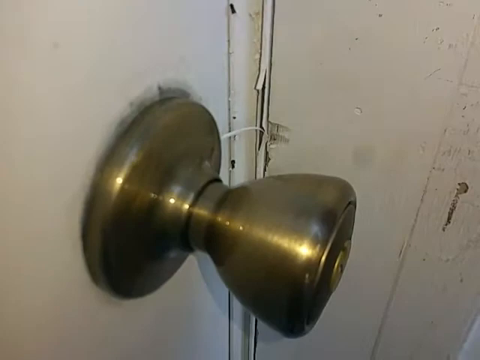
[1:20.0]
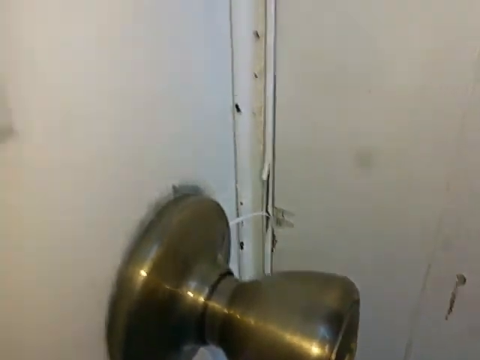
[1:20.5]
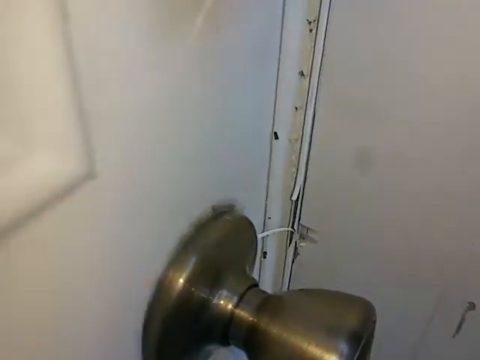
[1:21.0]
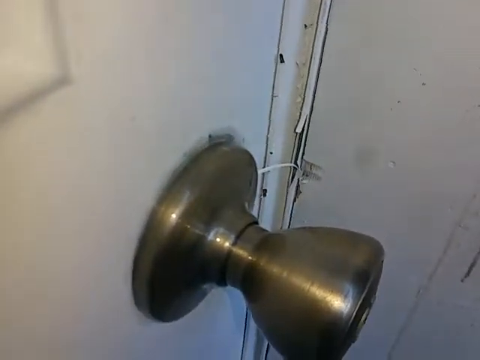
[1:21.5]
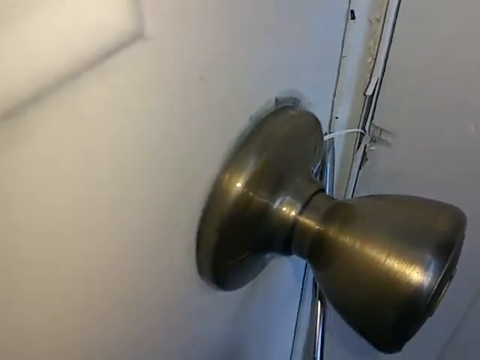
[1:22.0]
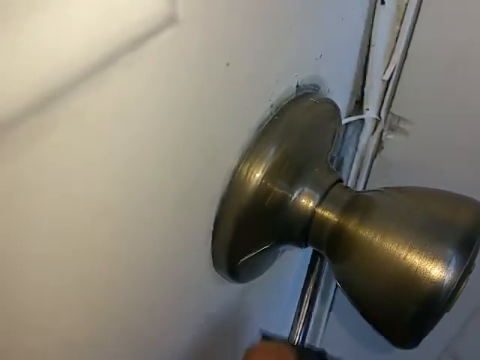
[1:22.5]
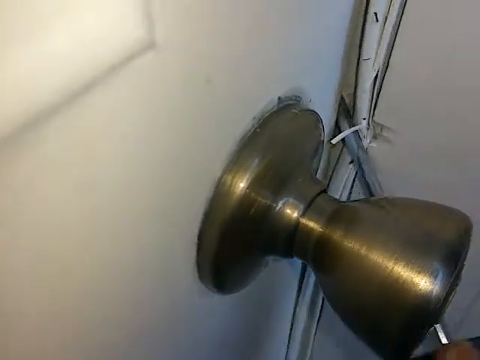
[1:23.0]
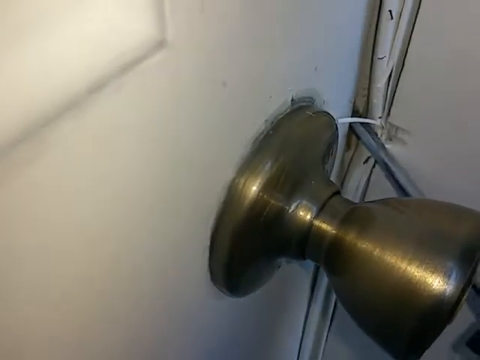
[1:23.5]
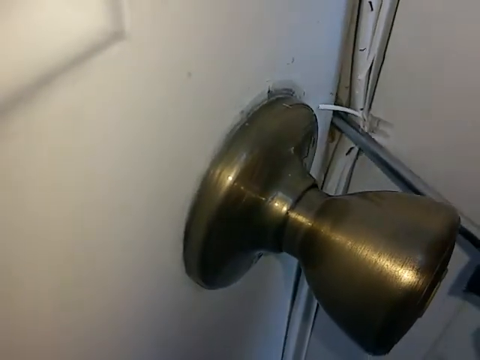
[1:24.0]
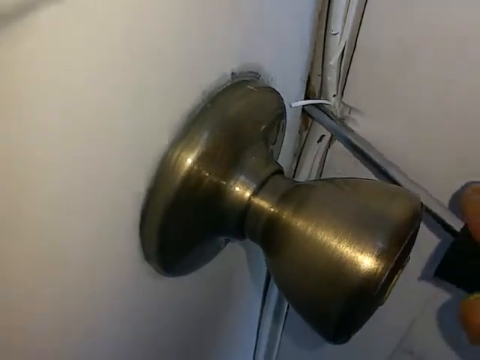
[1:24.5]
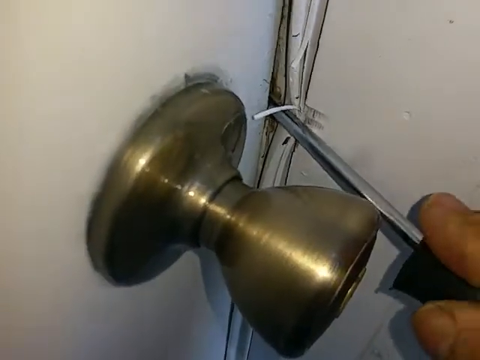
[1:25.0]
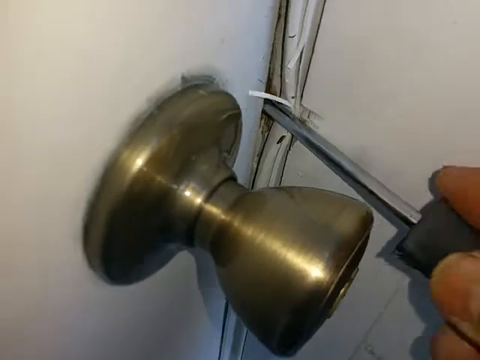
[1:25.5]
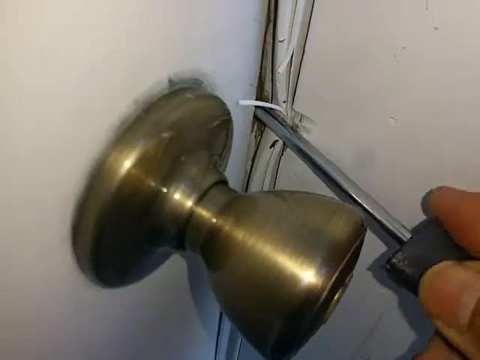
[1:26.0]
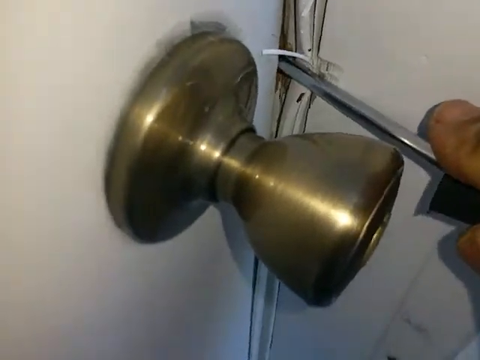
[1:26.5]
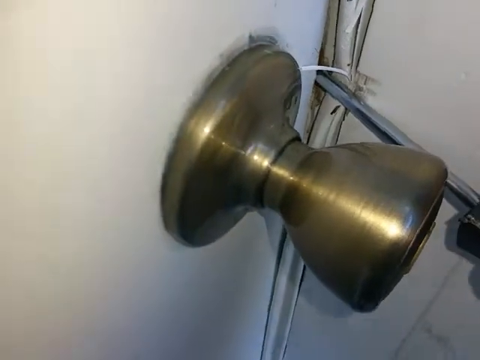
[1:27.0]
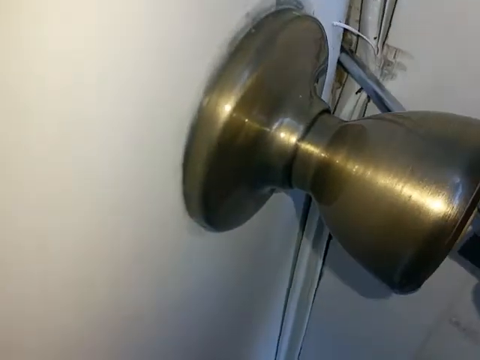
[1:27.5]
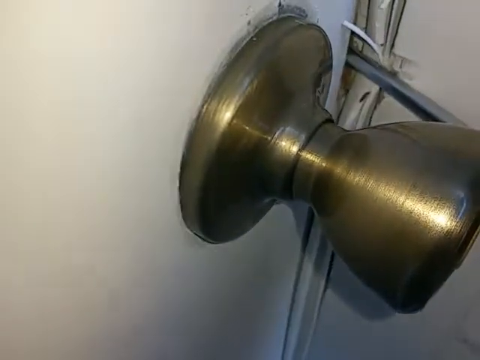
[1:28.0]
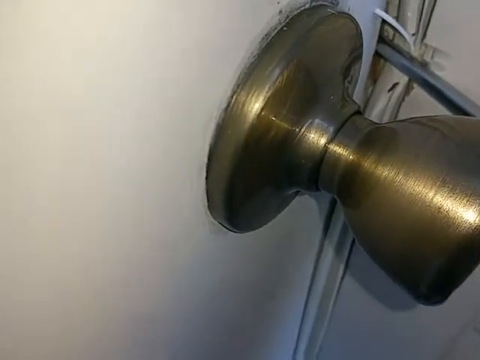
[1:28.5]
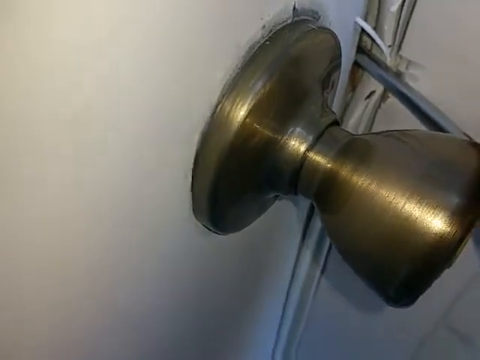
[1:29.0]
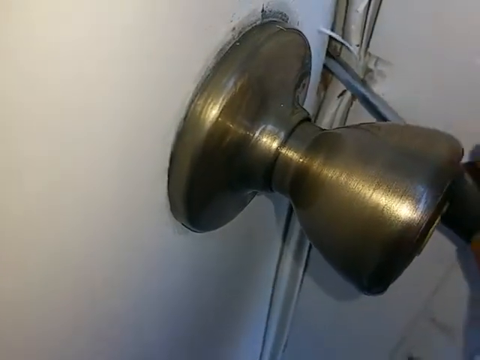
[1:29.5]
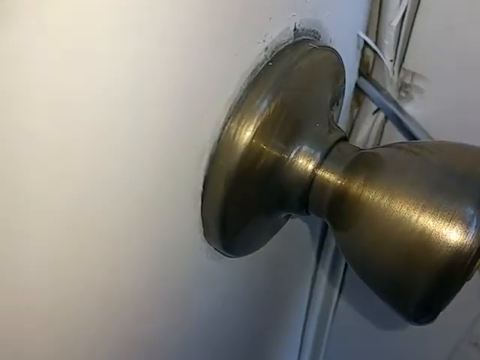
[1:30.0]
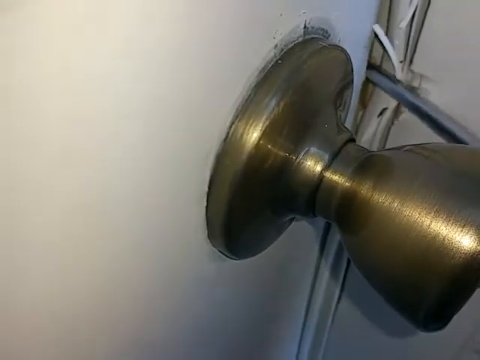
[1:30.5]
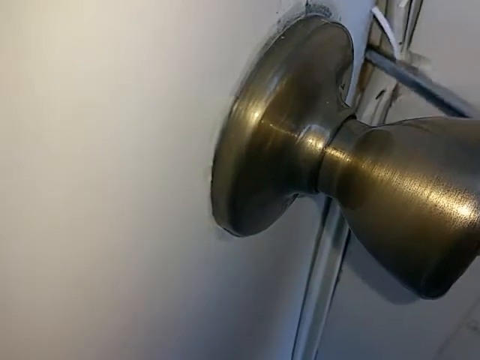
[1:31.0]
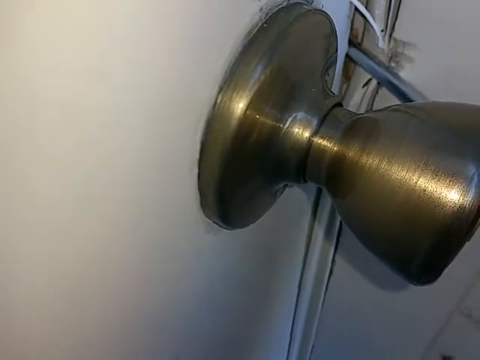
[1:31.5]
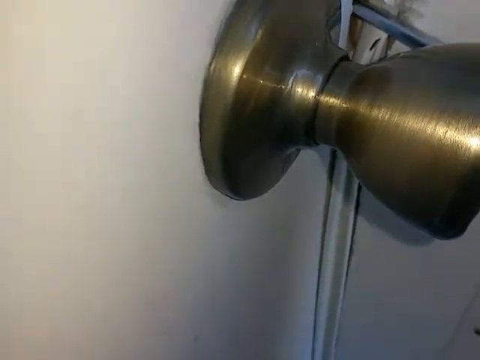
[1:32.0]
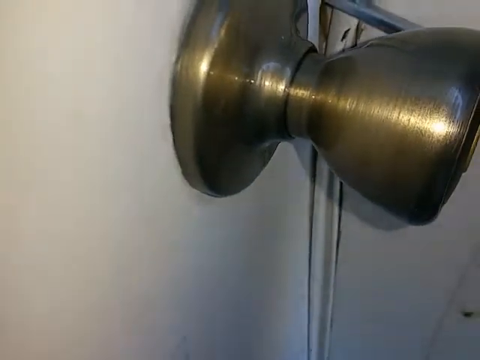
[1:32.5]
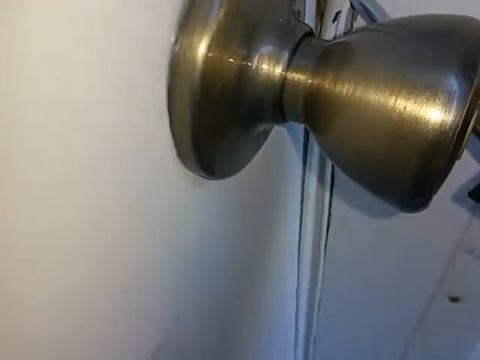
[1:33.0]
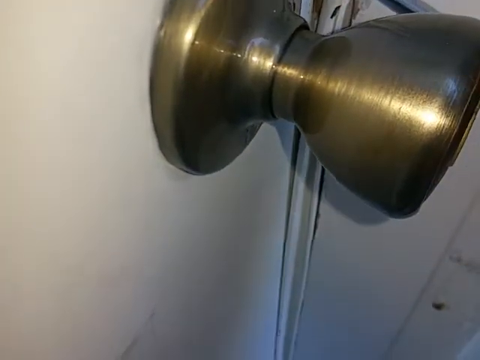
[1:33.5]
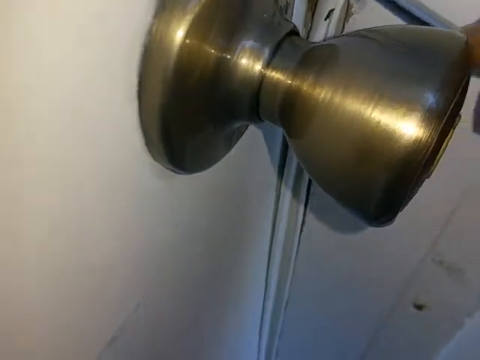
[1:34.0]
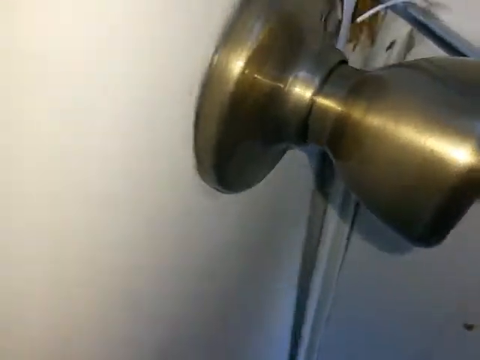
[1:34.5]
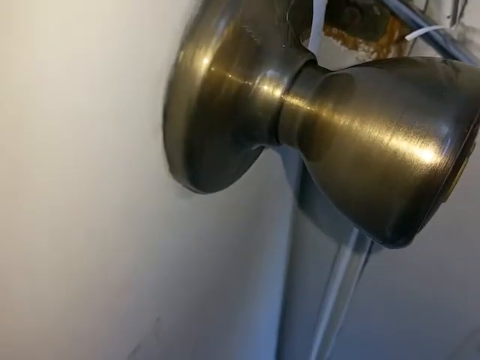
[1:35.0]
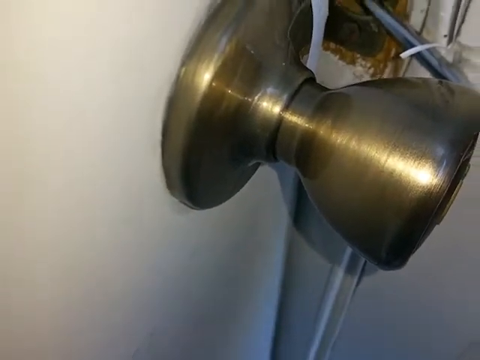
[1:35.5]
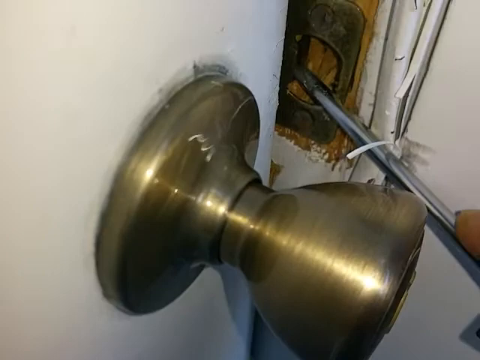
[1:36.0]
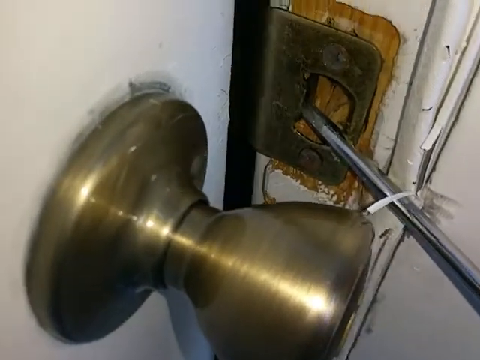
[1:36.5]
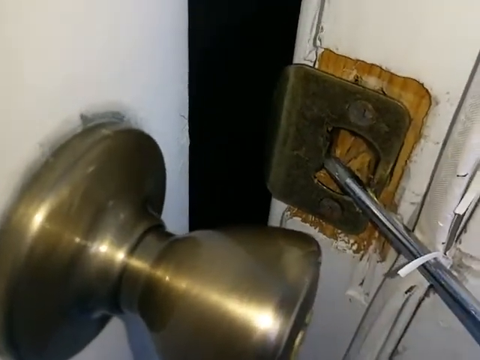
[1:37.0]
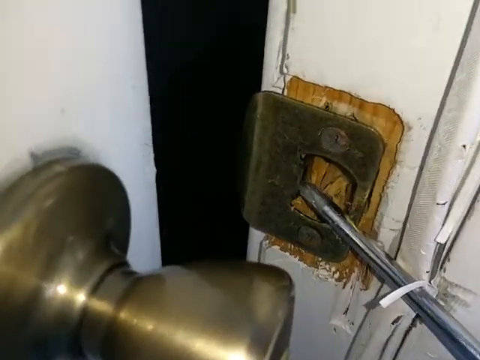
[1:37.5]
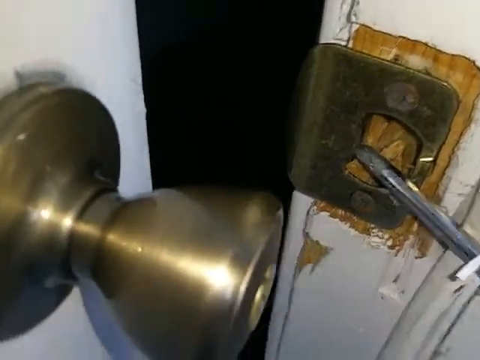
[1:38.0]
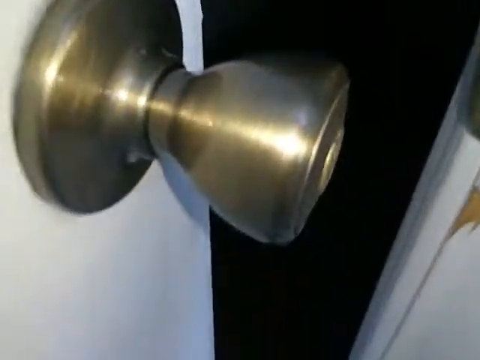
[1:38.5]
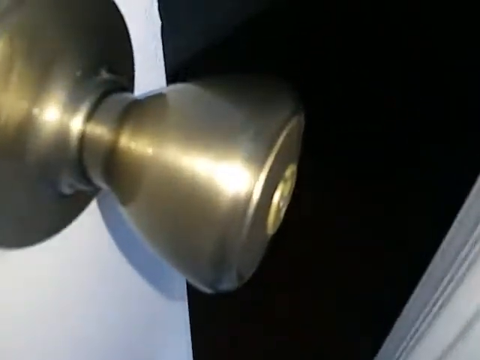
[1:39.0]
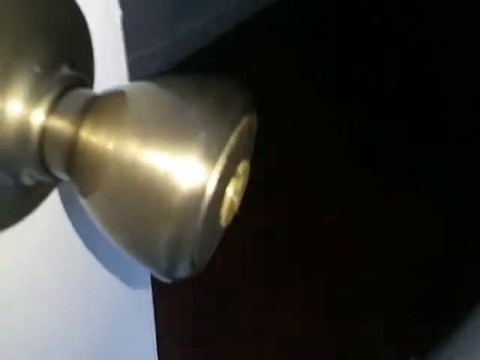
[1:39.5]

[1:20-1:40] The exterior side of the door is shown, and the screwdriver is wedged between the door and the weatherstripping, pushing and pivoting to lever it into the latch. The man keeps pushing the screwdriver in with his right hand, breaking the weatherstripping and pushing the door open. The tip of the screwdriver appears to activate the latch, so the door opens without the doorknob being twisted even though it is locked. The camera is held static in the left hand, with a zoomed-in view where the doorknob takes up most of the frame.